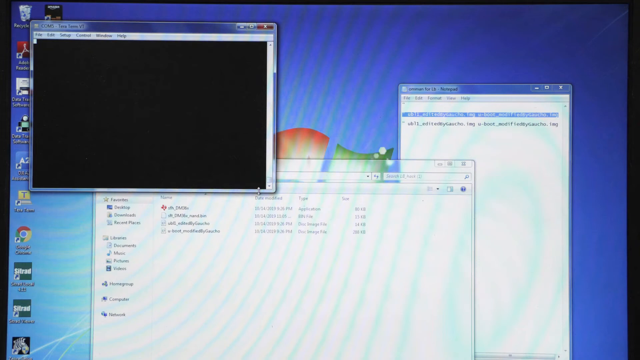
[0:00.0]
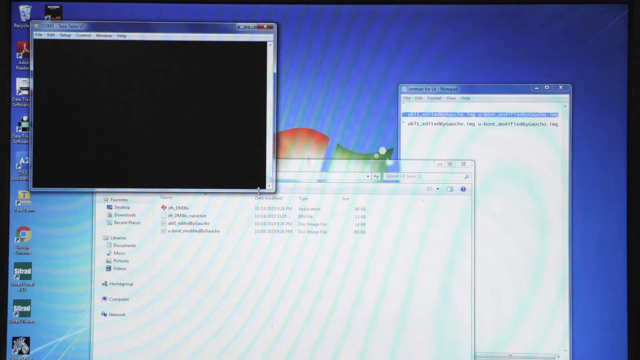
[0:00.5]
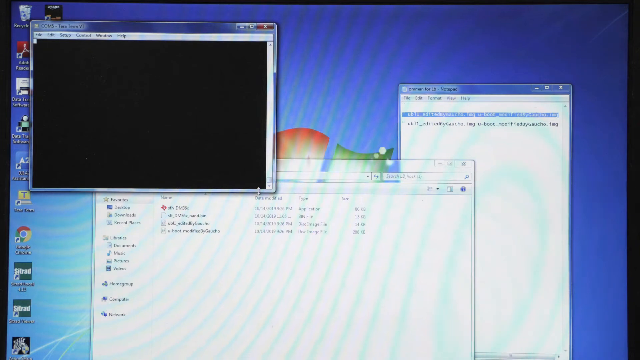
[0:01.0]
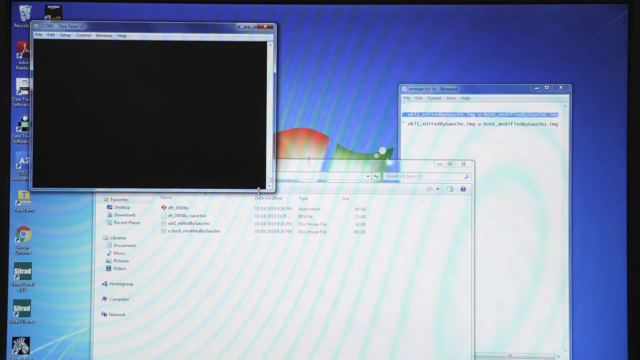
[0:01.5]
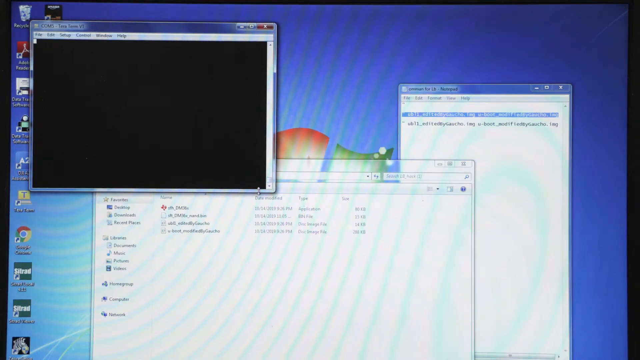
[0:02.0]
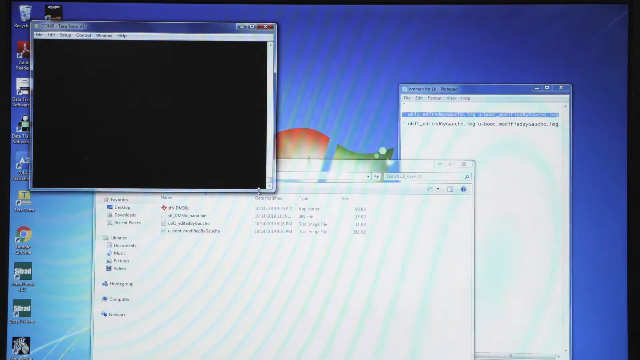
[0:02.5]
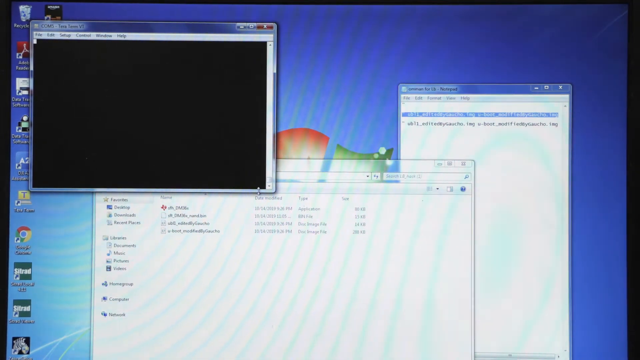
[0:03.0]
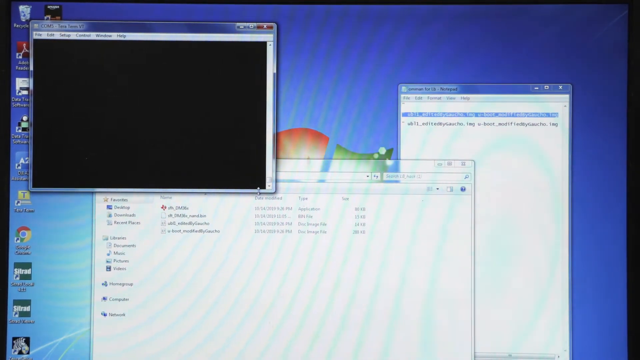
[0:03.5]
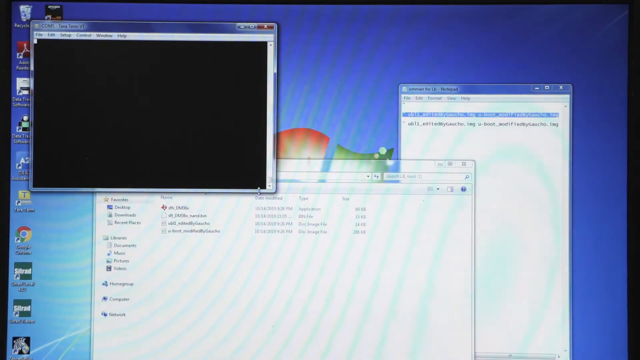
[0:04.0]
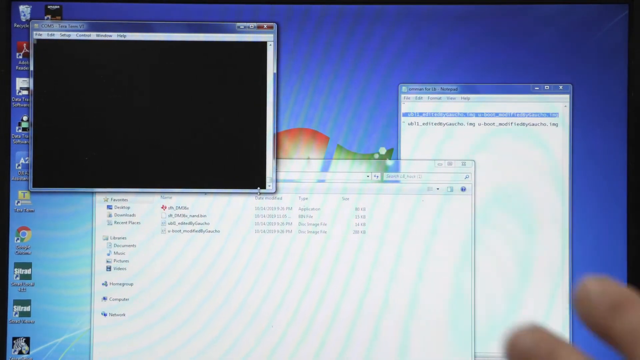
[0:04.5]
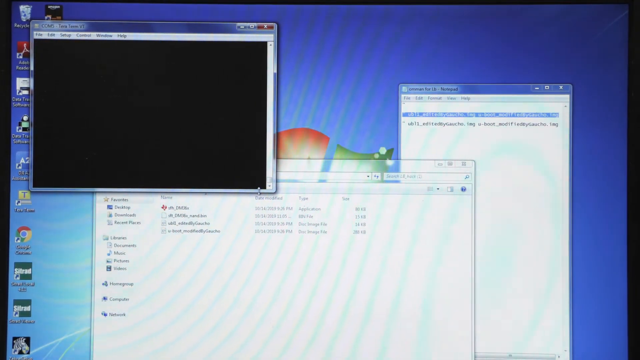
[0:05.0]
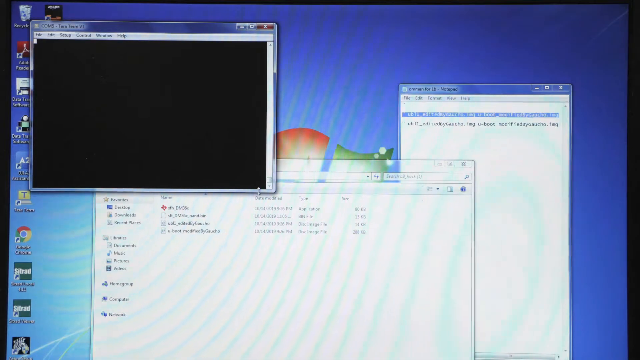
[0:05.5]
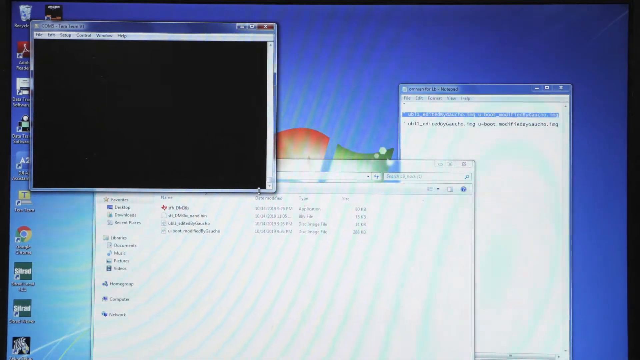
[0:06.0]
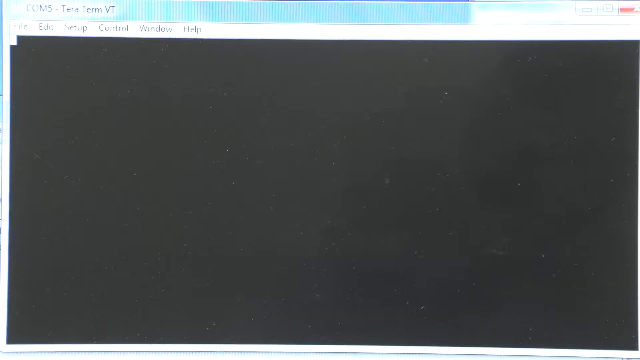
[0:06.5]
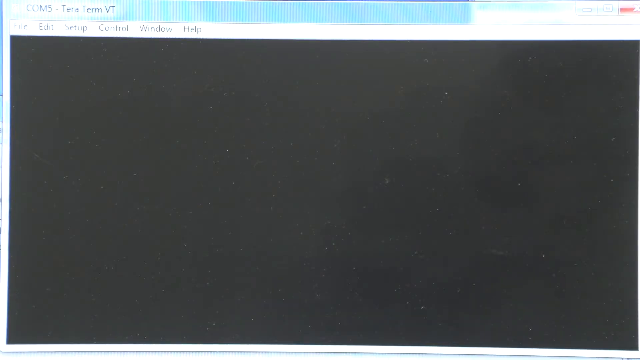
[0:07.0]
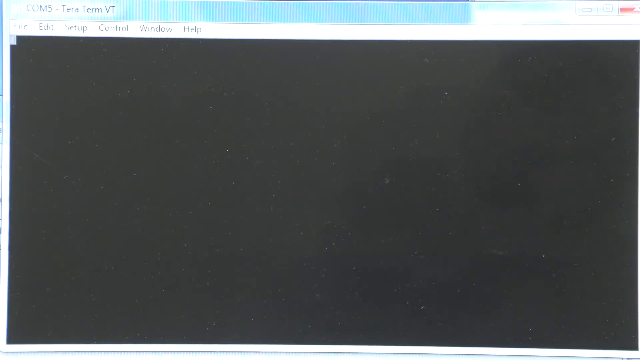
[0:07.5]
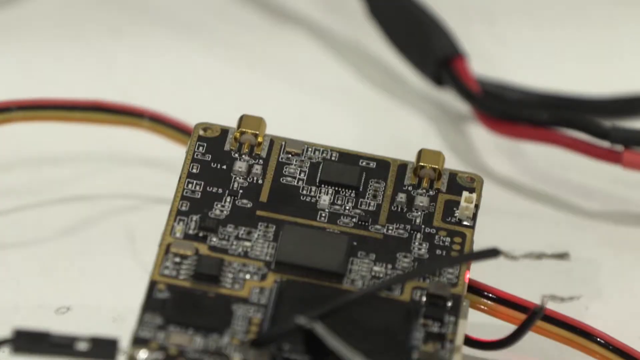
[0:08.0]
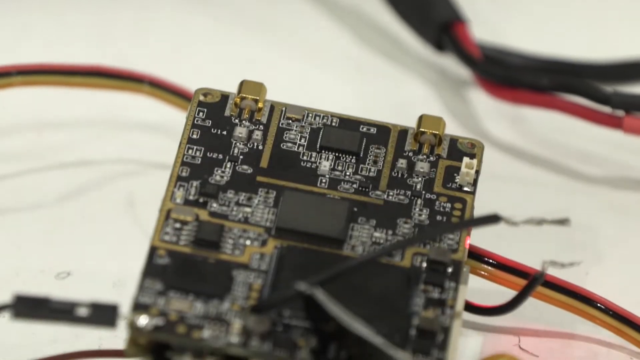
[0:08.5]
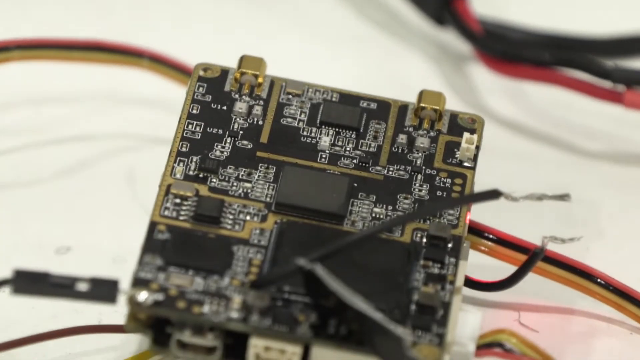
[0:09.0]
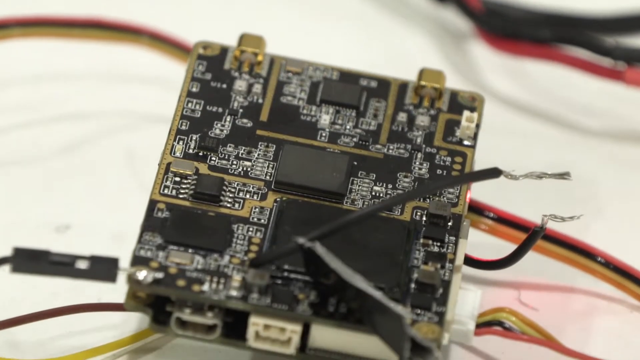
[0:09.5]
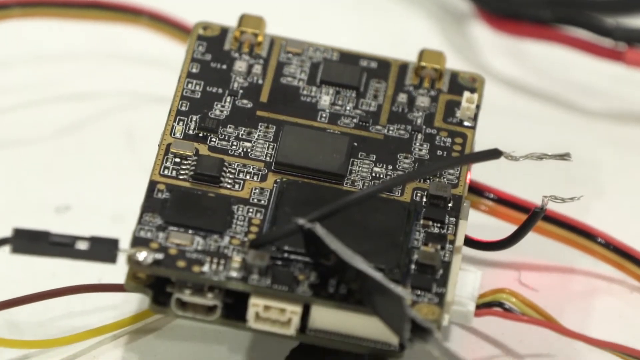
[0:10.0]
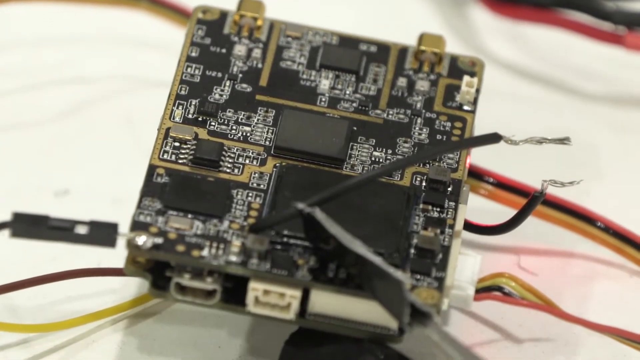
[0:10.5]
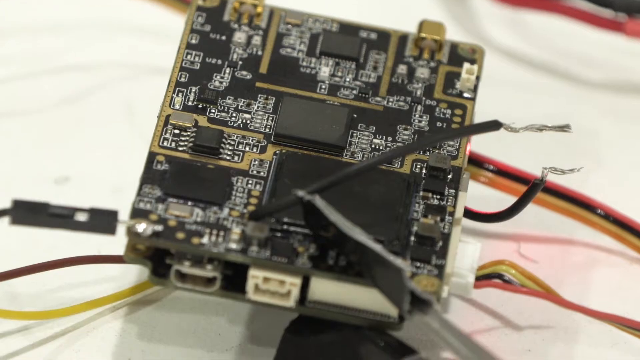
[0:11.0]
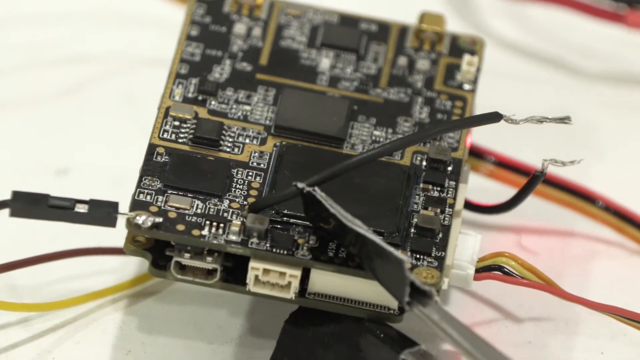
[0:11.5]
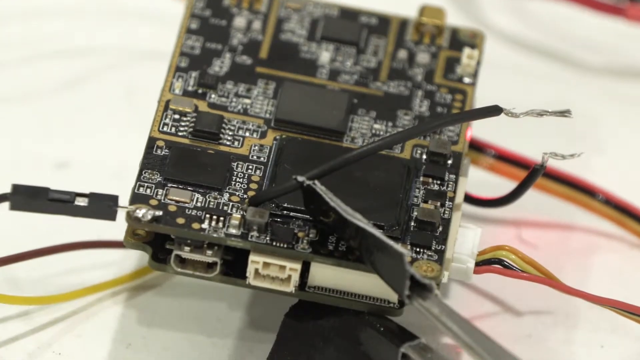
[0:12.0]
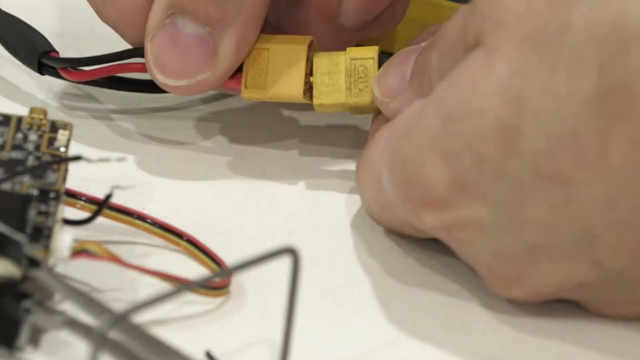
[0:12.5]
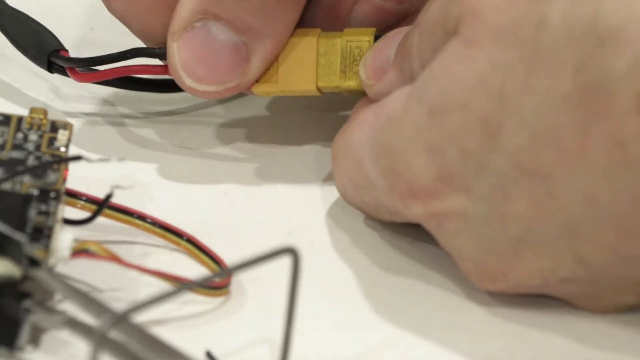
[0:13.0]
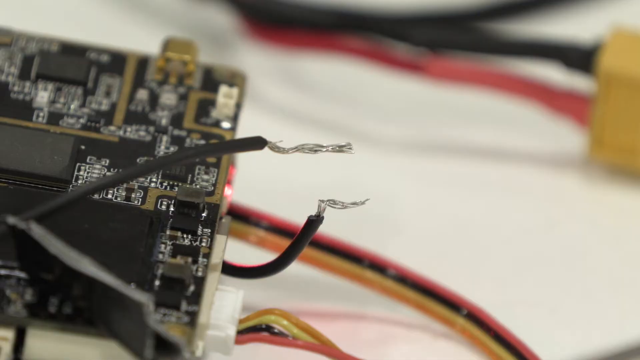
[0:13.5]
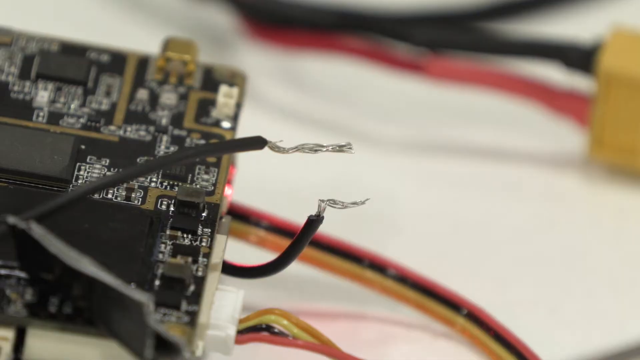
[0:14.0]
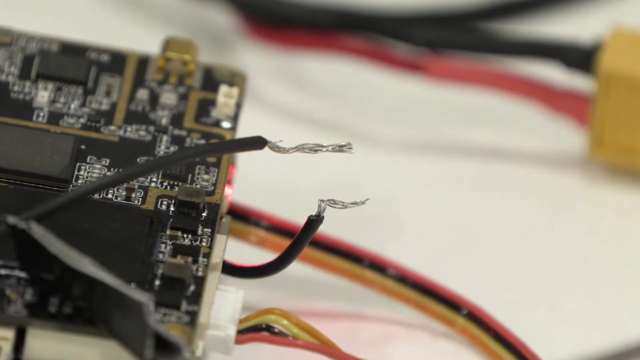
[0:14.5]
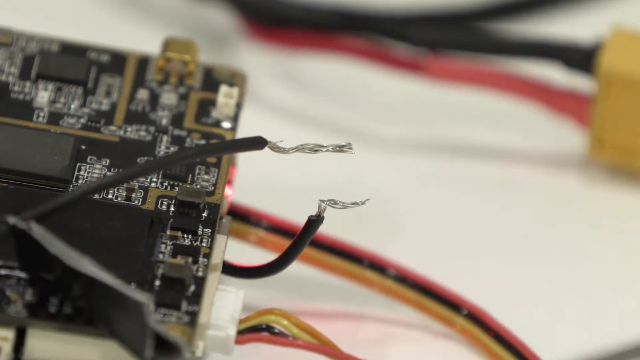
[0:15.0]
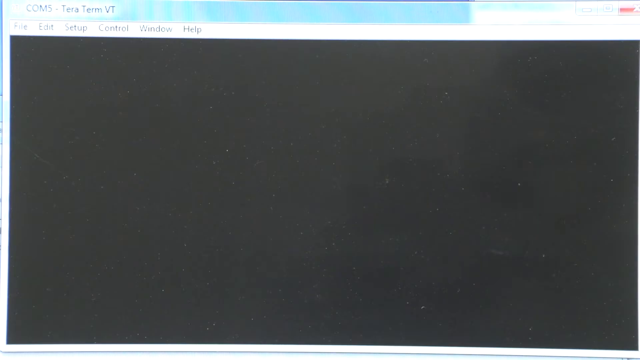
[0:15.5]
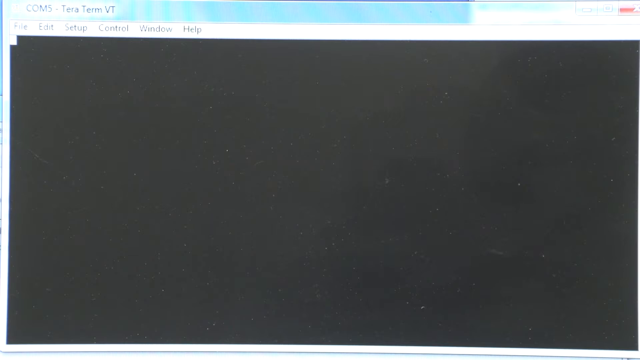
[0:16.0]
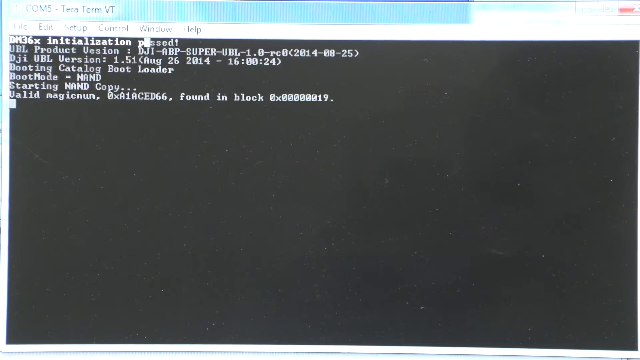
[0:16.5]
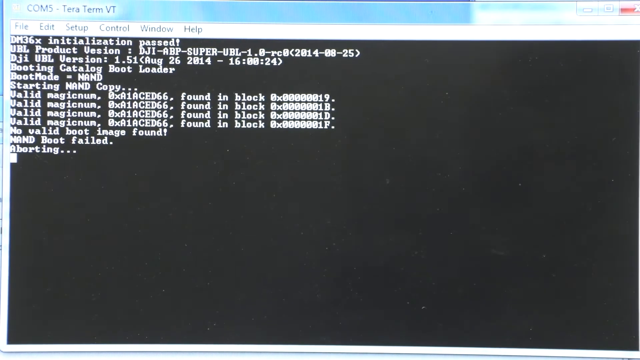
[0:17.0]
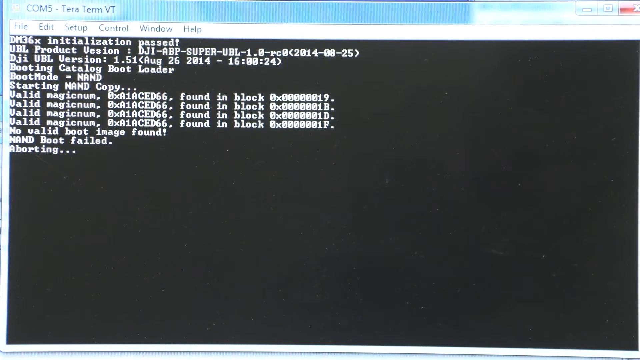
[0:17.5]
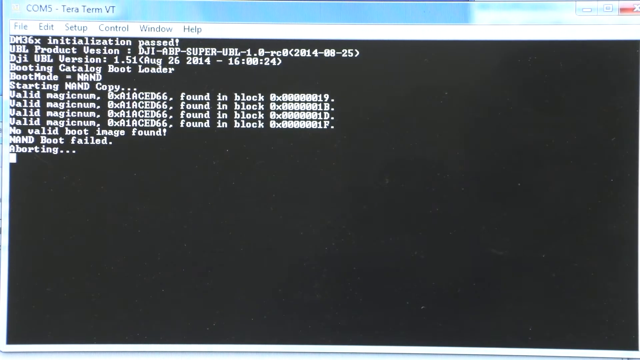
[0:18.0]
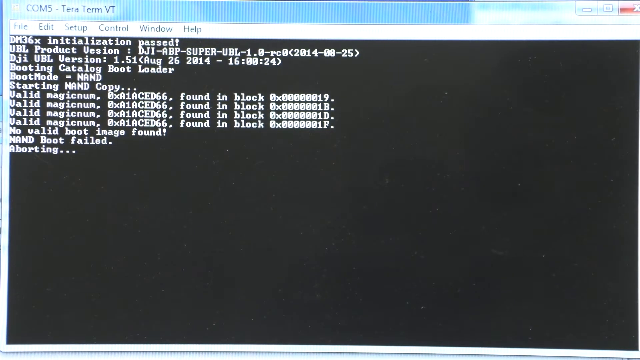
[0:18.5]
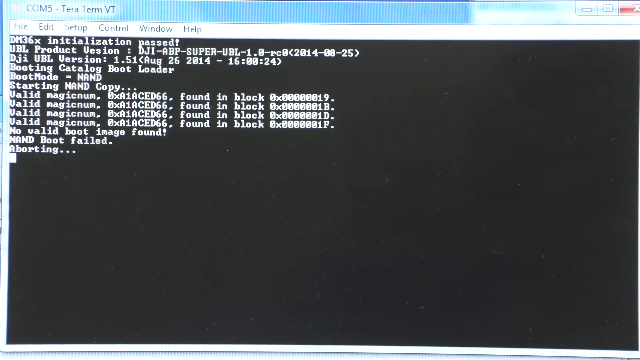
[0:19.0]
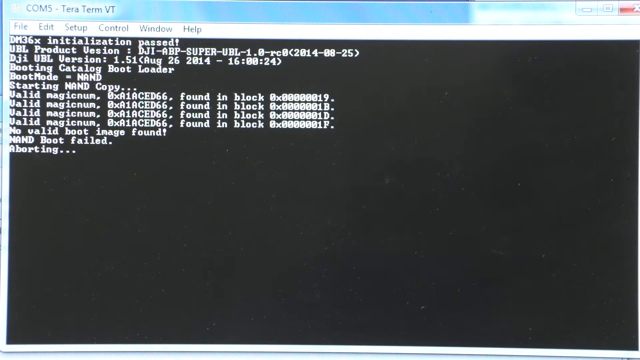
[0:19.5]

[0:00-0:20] The video opens on an early 2000s era Windows home page with three dialog boxes open. One is empty with a black background. A bigger rectangular box toward the middle is white with some files shown. The third box, in the background, is a taller but narrower rectangle with a couple of lines of text on it. Other options are visible on the Windows home page, including search engines and internet options such as Google Chrome. A gray box then appears briefly for about a second, covering the entire screen. Next comes what appears to be a computer chip, shown relatively zoomed in so that it takes up most of the frame, in the center. It is black with gold elements and kind of some silver pieces that are part of the chip. Two wires protrude from it, one coming out above and one from below. In the background there is a red, black and yellow wire that is three wire lengths wide, and in the corner of the screen there is a much thicker black and red wire.